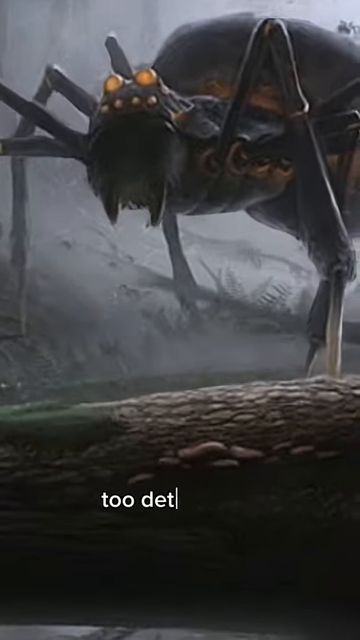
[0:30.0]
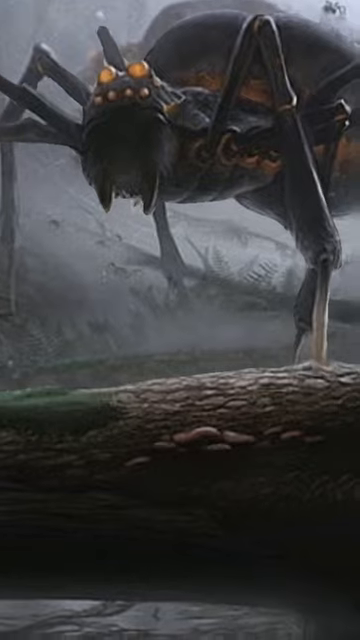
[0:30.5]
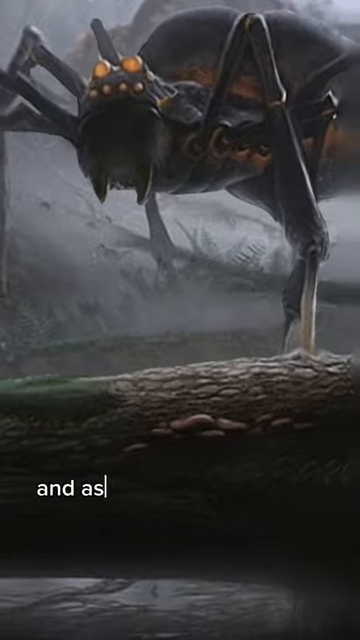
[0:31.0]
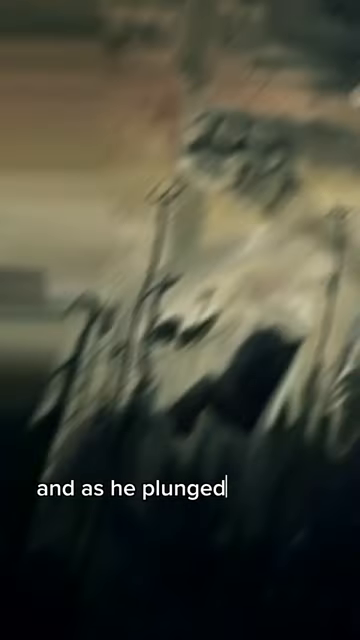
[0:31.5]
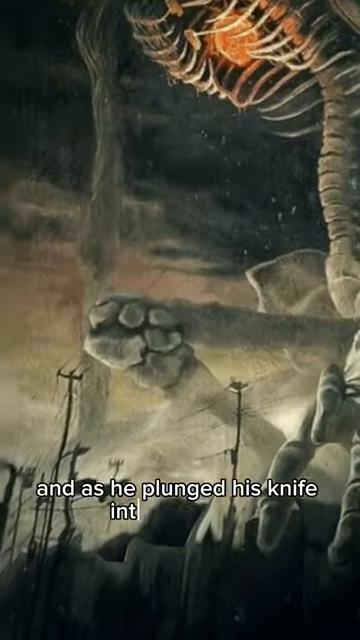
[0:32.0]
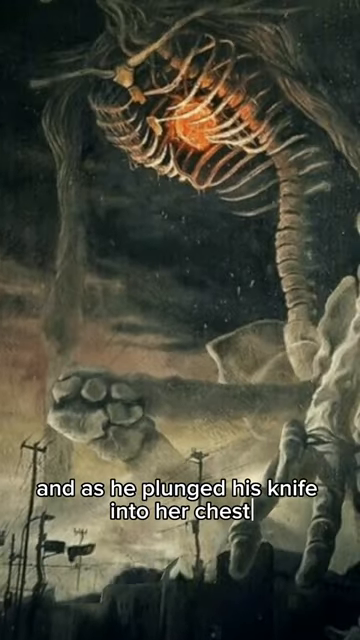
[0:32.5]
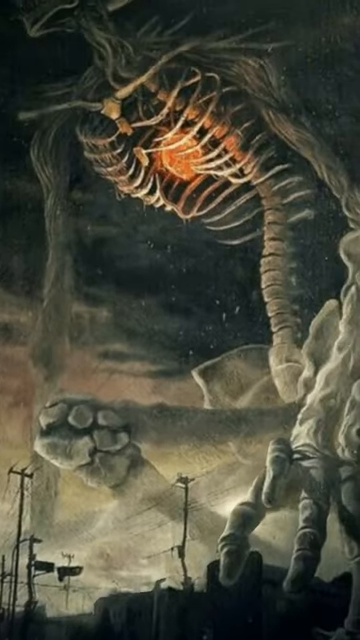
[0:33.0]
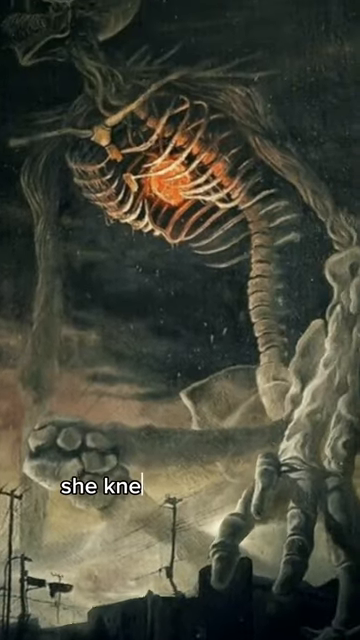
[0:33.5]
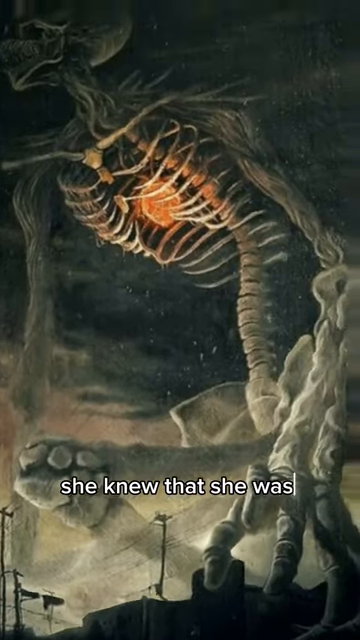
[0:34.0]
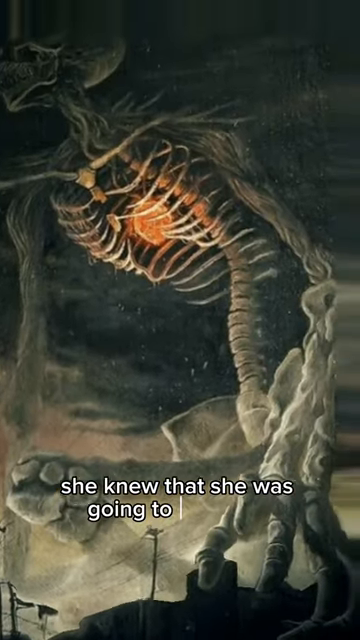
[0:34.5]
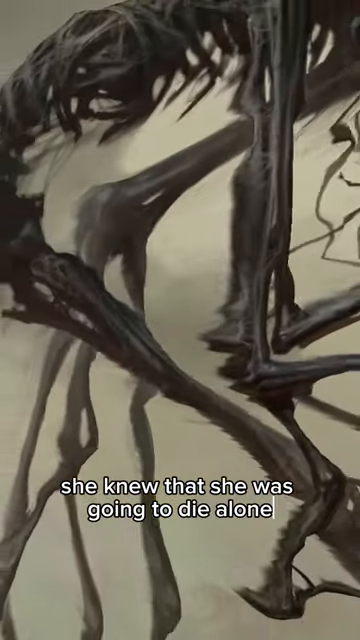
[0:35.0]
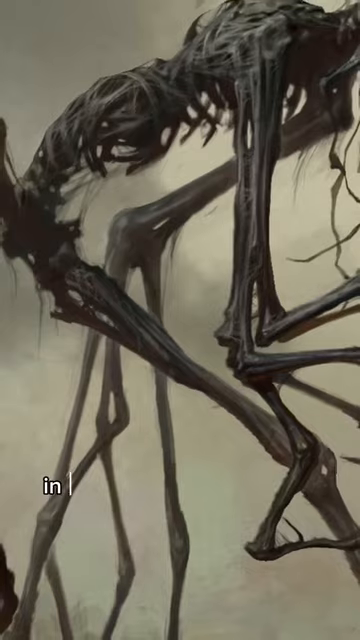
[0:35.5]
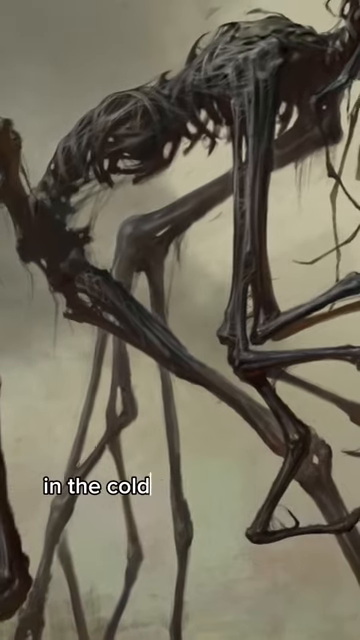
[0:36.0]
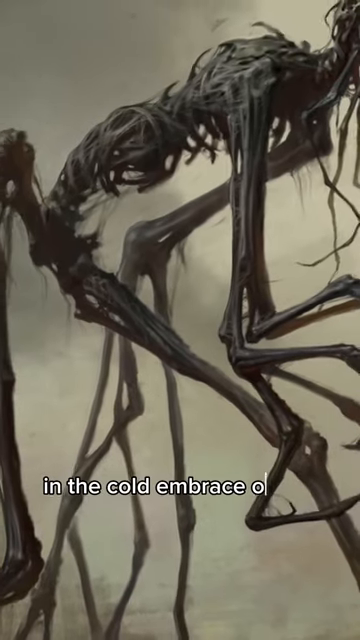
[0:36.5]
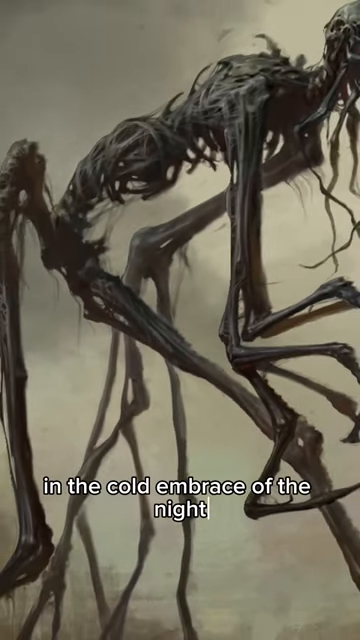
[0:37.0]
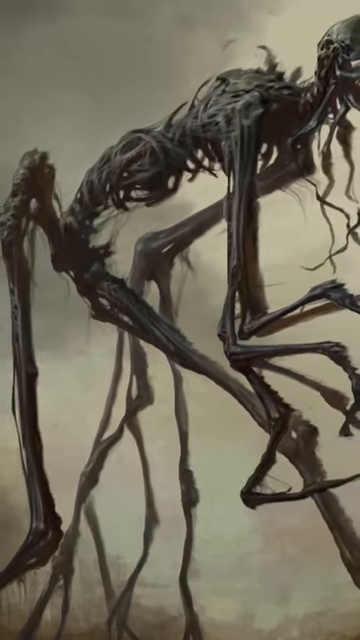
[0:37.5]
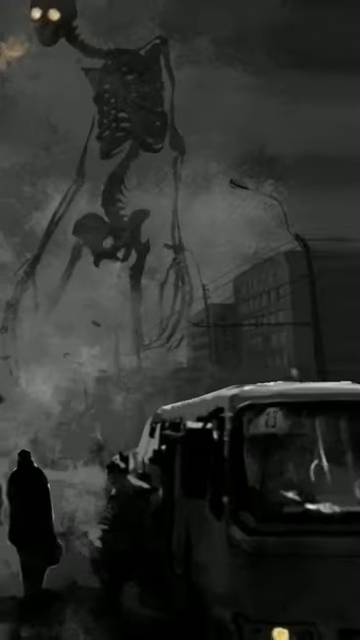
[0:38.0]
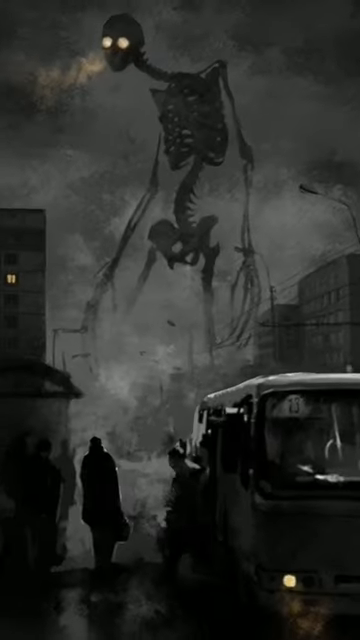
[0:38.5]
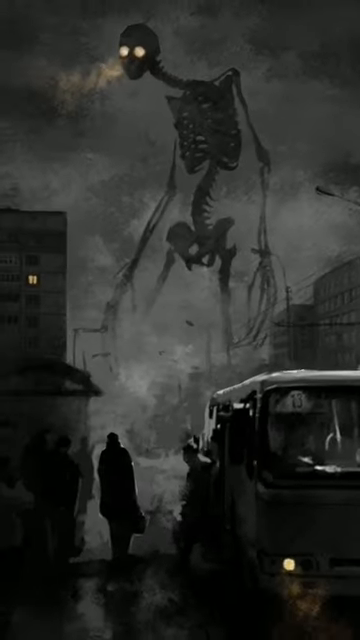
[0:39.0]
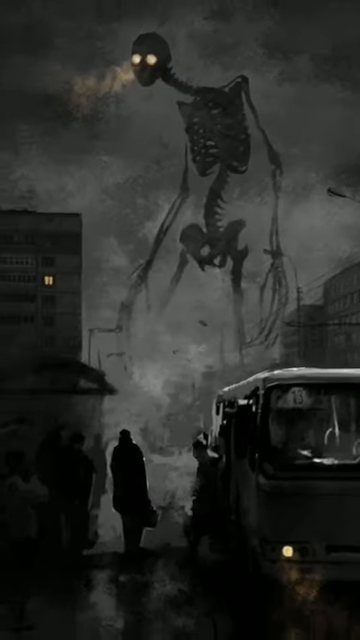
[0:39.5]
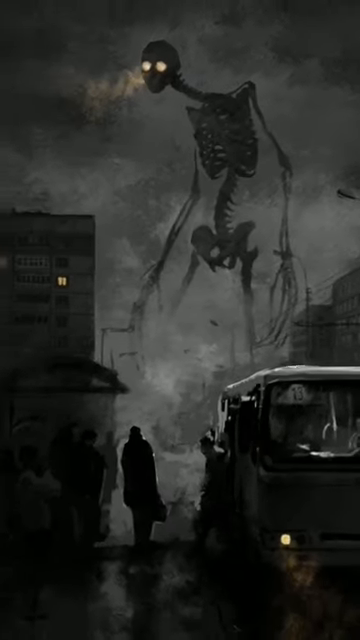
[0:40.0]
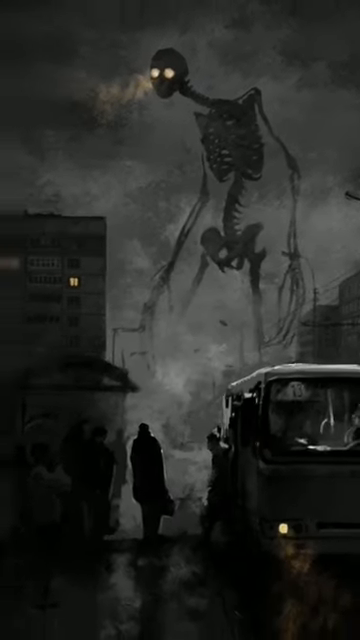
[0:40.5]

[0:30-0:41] The story continues with more different monsters: a spider one, a skeleton one, and two more skeleton ones, about four monsters in all, kind of just standing there. The story moves on to the woman dying; she apparently gets stabbed by the monster. The setting seems to be a street. The pictures vary in their lighting.